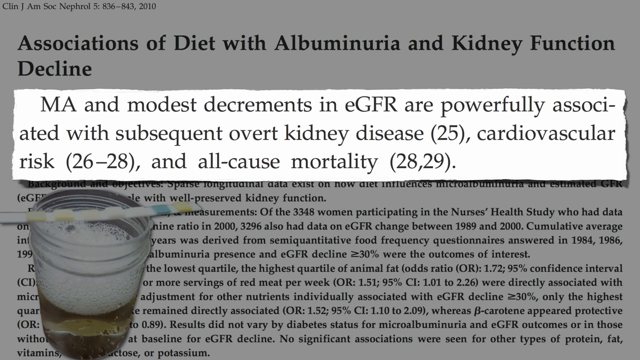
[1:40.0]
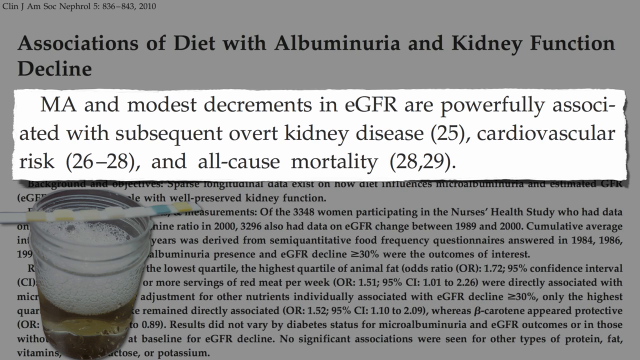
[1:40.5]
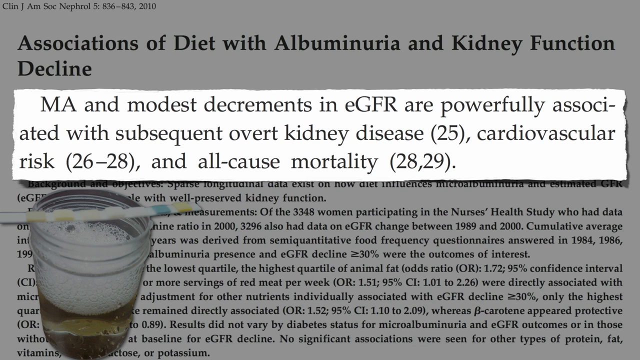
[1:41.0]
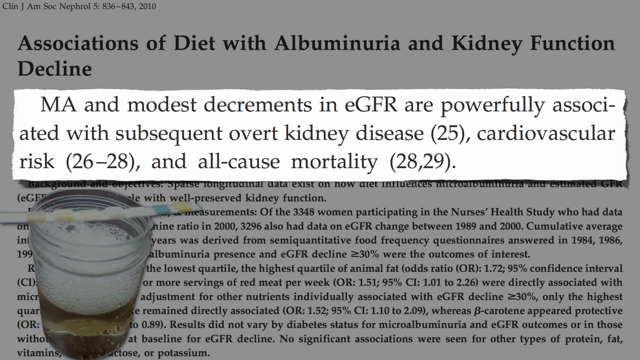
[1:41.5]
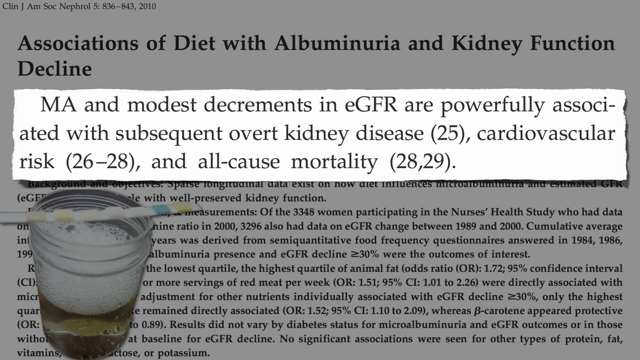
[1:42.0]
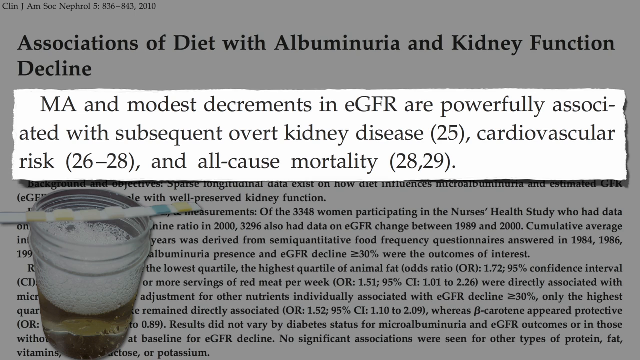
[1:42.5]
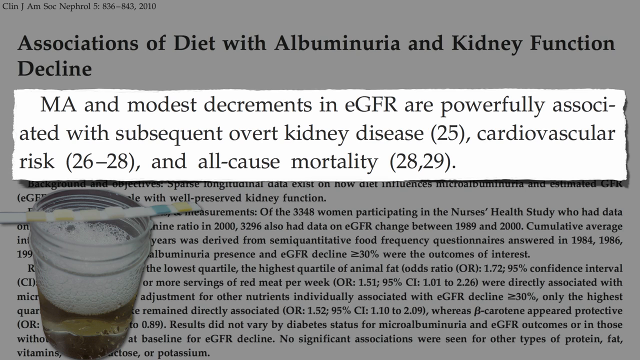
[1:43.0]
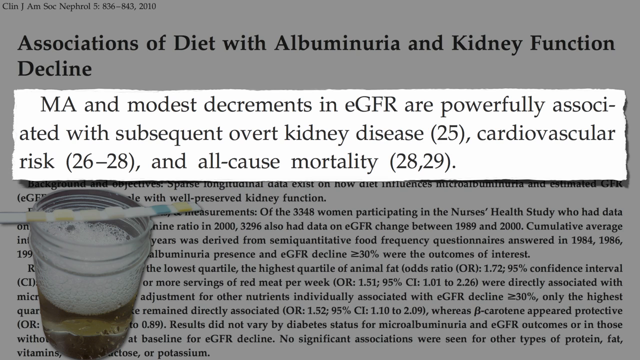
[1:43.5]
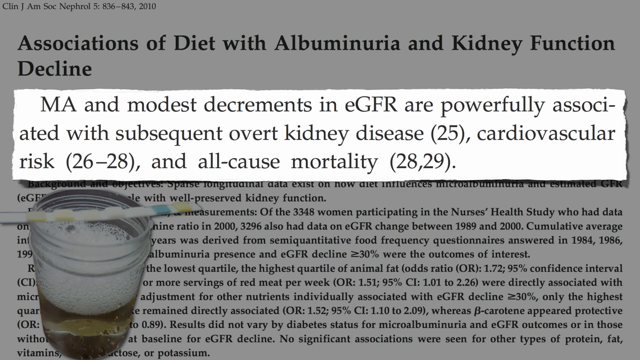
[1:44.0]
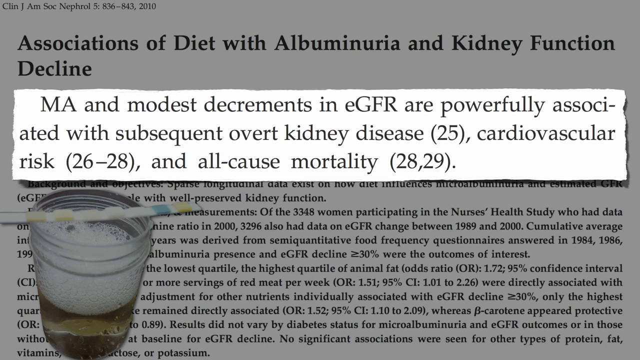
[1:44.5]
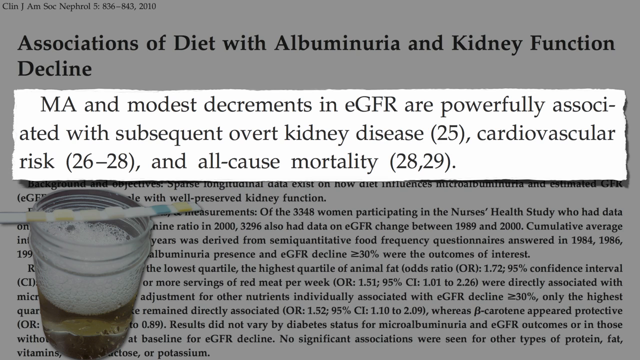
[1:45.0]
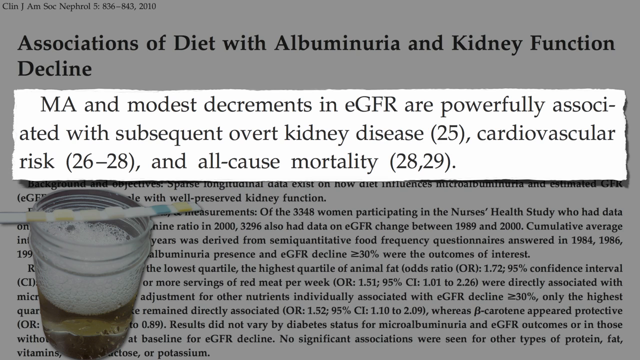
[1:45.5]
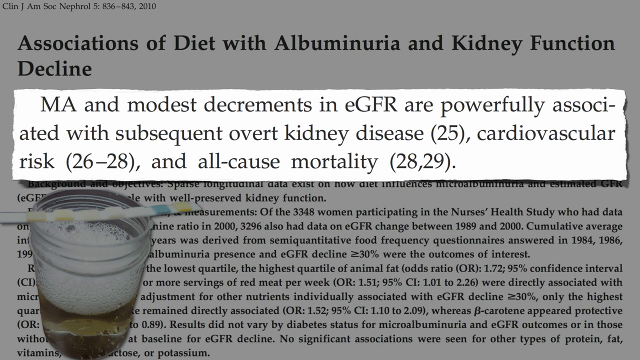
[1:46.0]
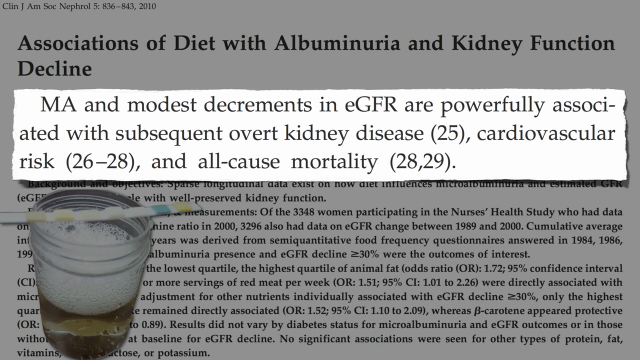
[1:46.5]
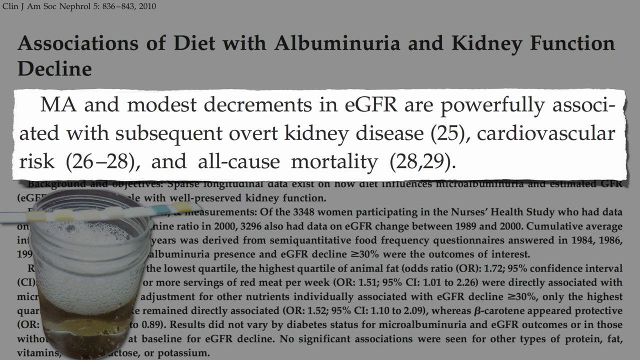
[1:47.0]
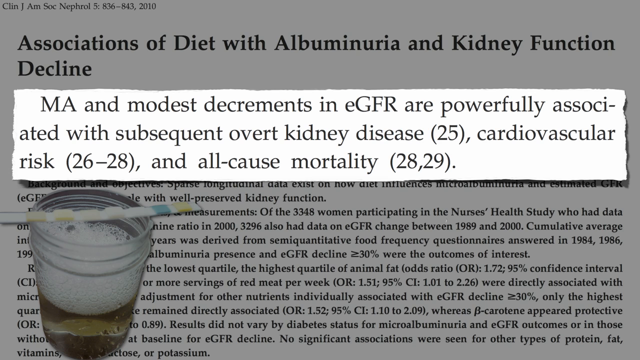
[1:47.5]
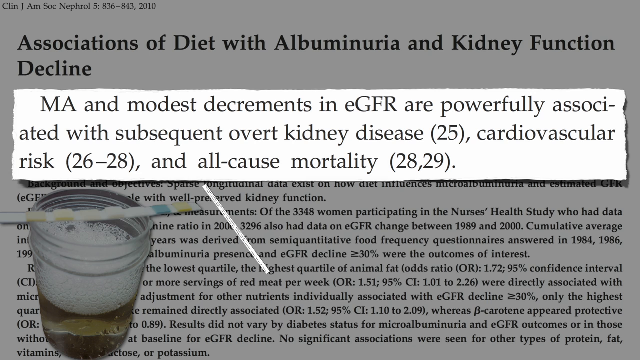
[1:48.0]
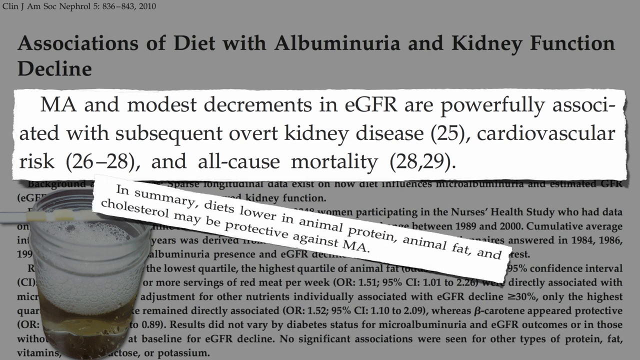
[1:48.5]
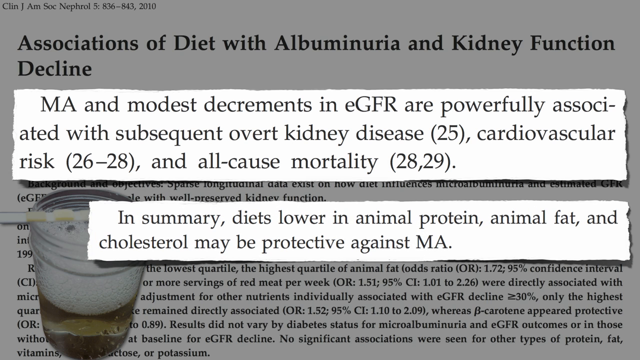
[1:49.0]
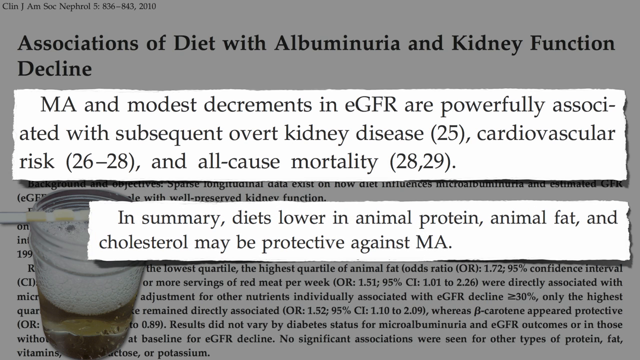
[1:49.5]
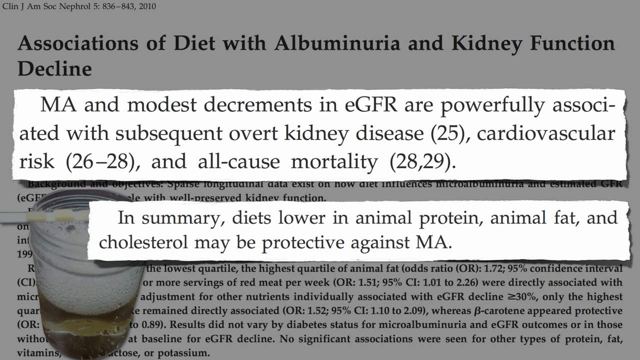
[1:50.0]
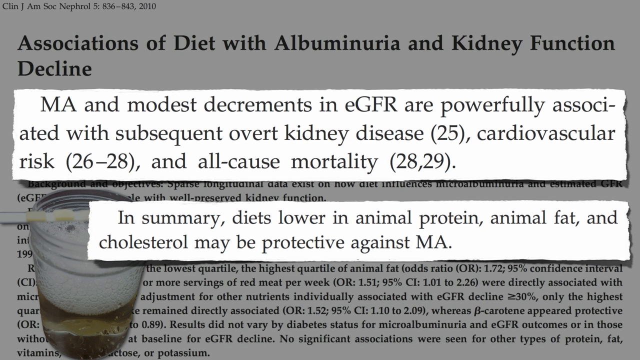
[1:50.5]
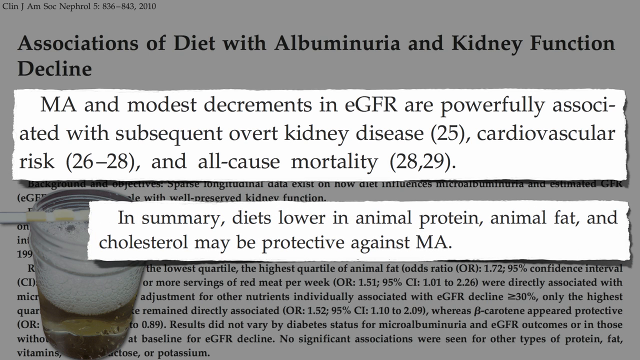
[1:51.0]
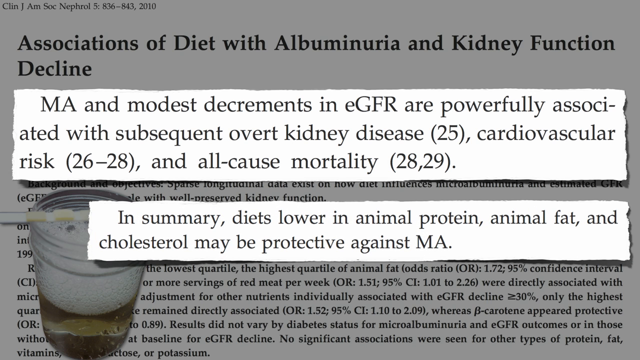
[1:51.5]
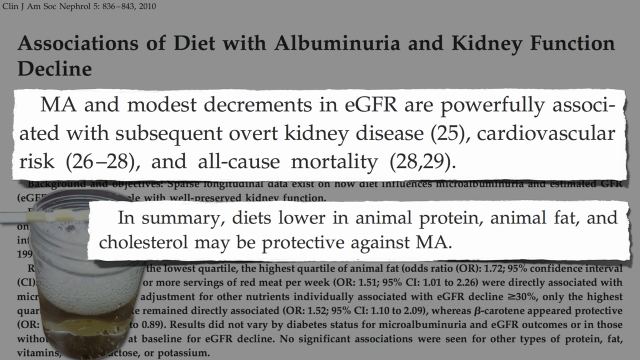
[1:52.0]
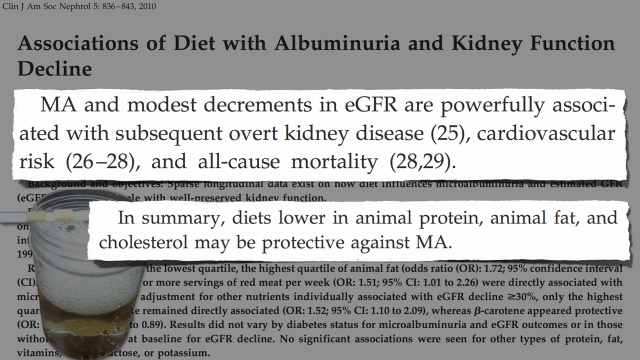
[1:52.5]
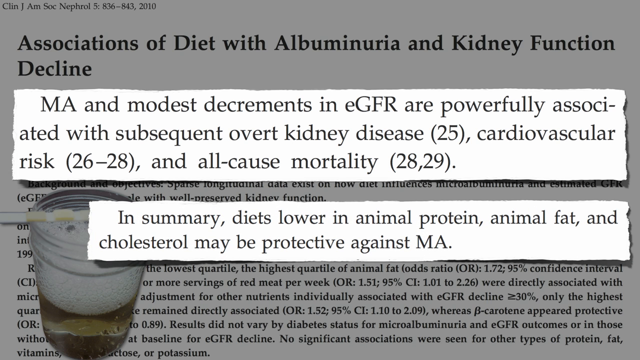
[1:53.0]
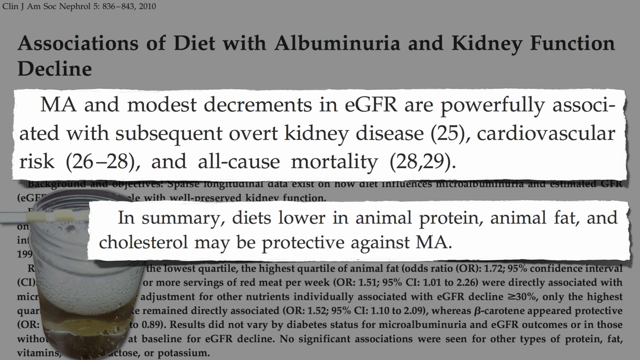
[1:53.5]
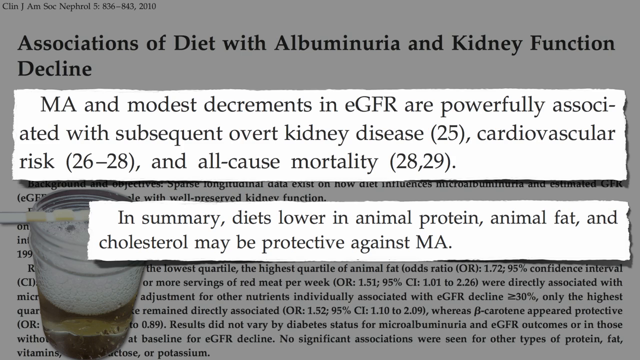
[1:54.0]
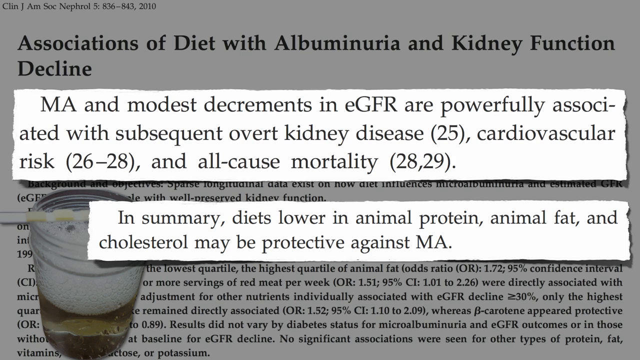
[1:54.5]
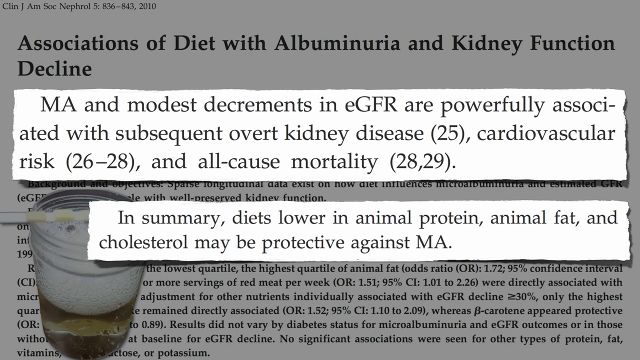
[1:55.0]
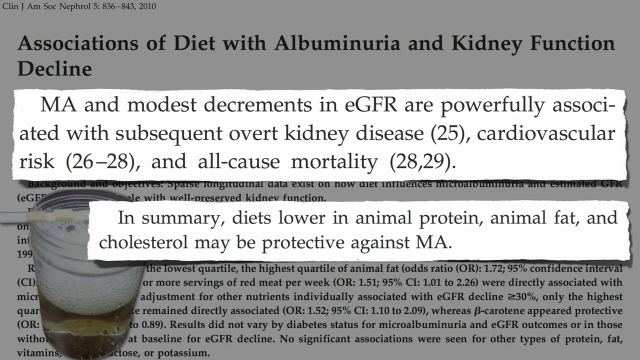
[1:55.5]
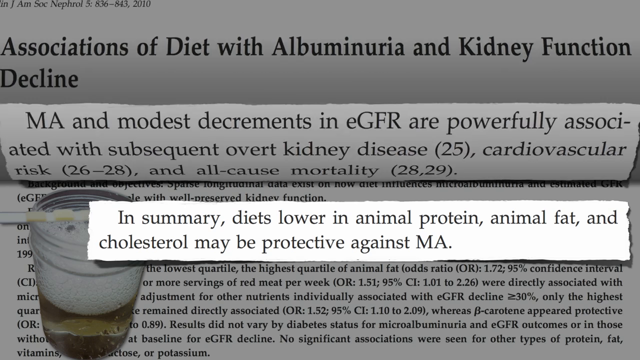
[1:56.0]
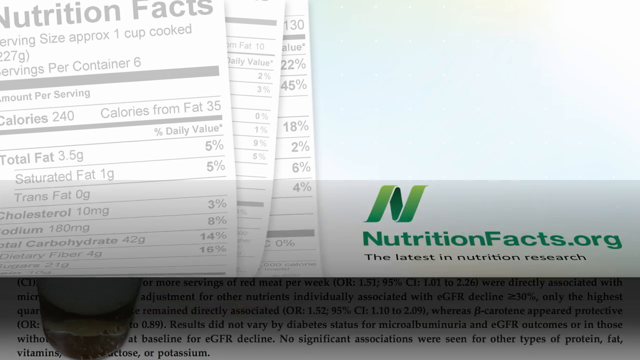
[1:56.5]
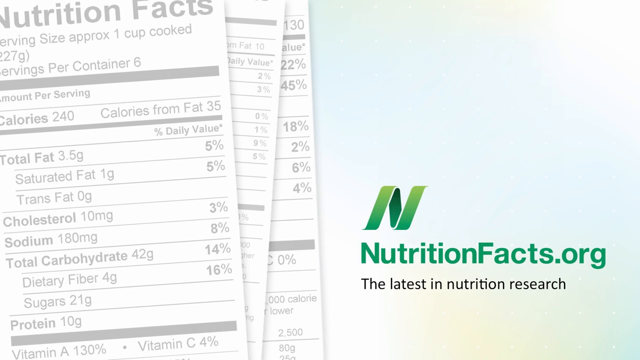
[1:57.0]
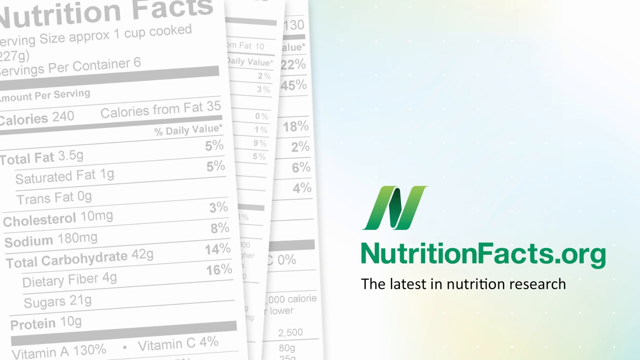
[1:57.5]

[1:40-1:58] The study "Associations of Diet with Albuminuria and Kidney Function Decline" is on screen with a small pop-up saying "MA and modest decrements in EGFR are powerfully associated with subsequent overt kidney disease, cardiovascular risk, and all-cause mortality," followed by what look like citation numbers 25, 26 to 28, and 28 to 29. Another pop-up appears: "in summary, diets lower in animal protein, animal fat, and cholesterol may be protective against MA." The whole page then flips down from the top, and the video returns to the nutritionfacts.org screen before going black.